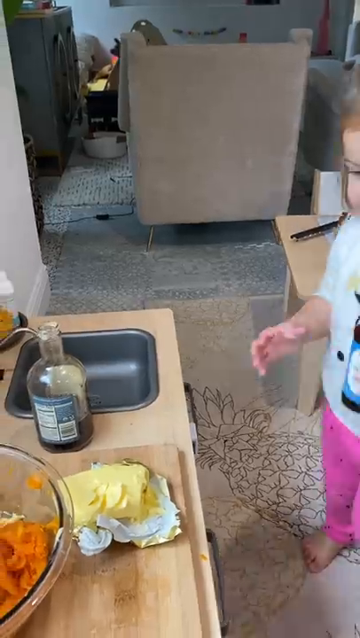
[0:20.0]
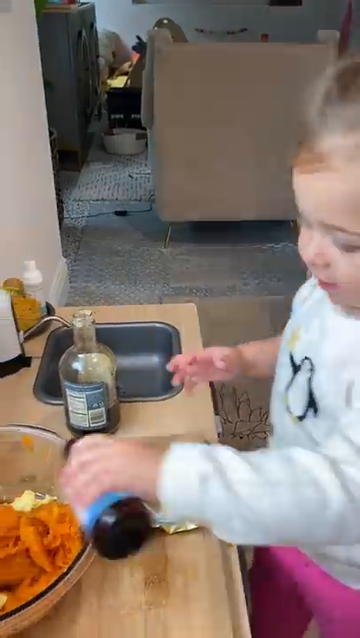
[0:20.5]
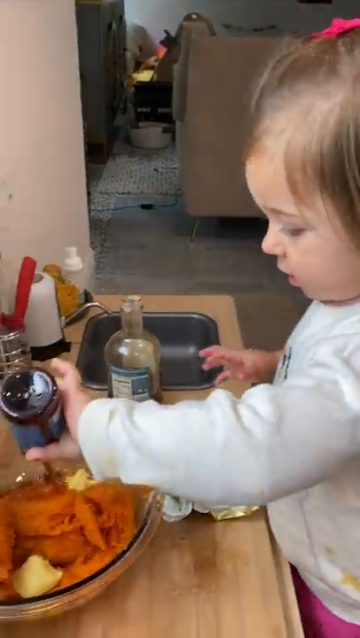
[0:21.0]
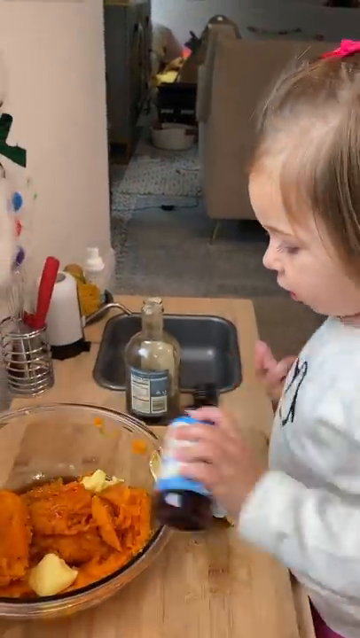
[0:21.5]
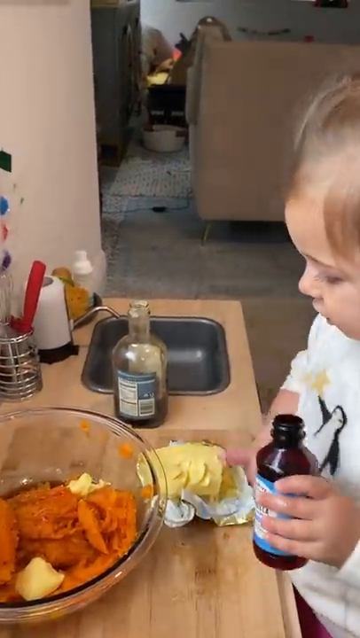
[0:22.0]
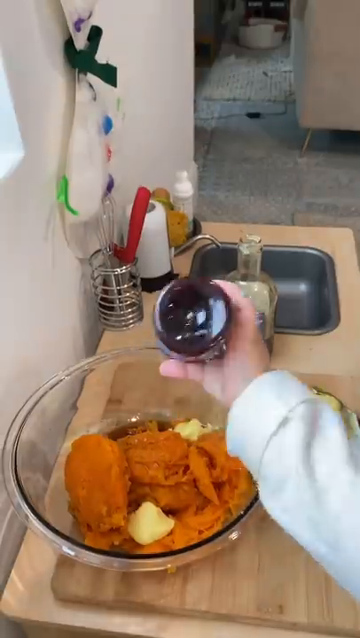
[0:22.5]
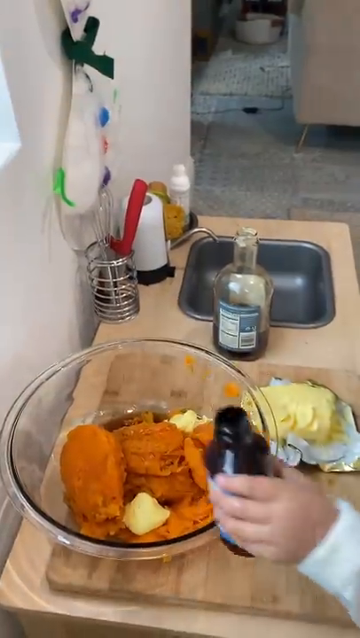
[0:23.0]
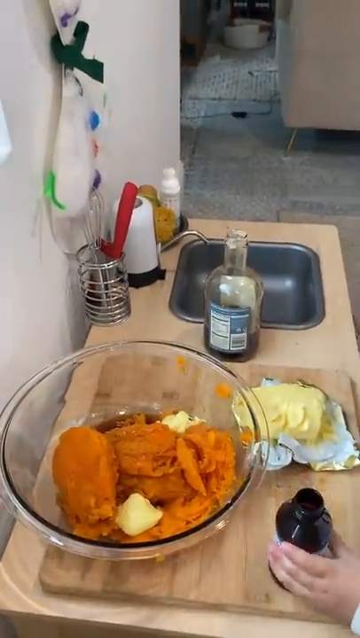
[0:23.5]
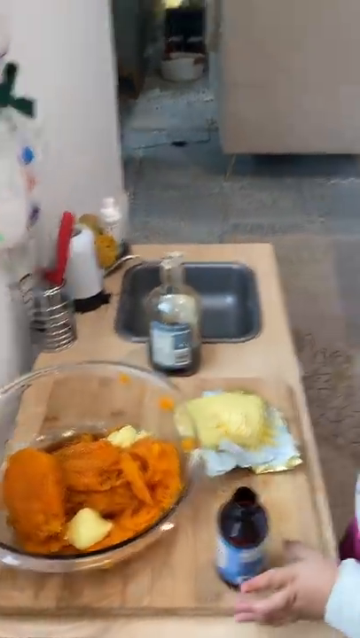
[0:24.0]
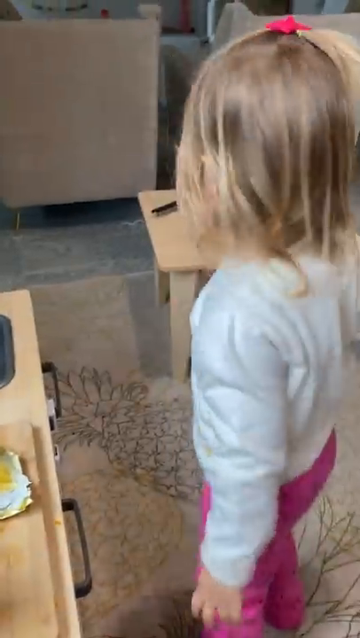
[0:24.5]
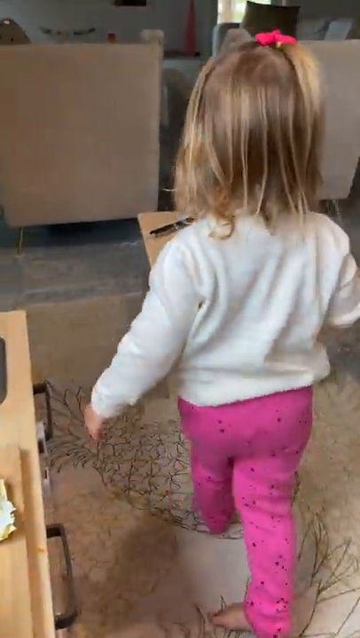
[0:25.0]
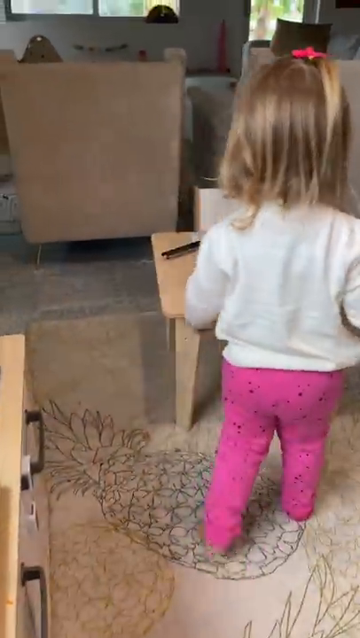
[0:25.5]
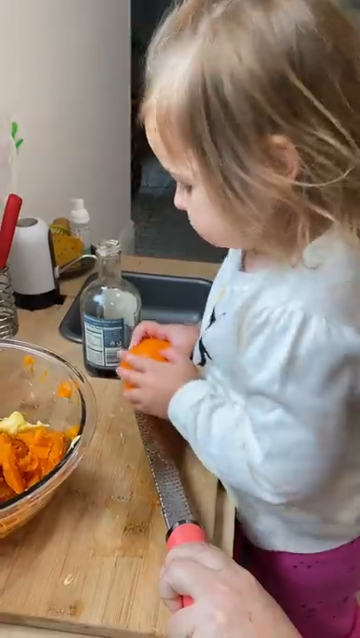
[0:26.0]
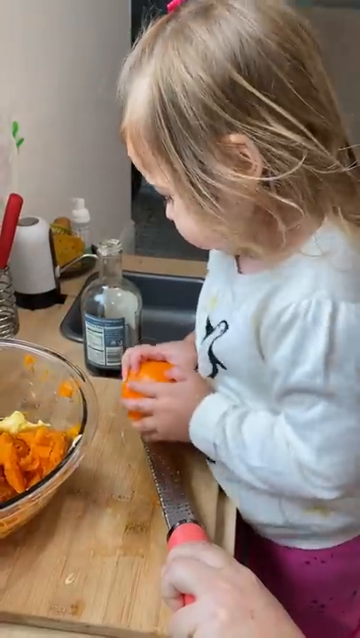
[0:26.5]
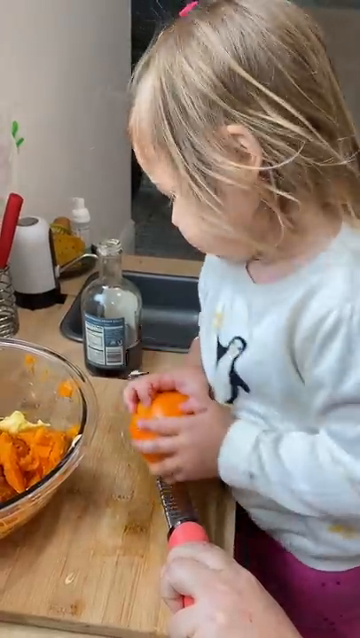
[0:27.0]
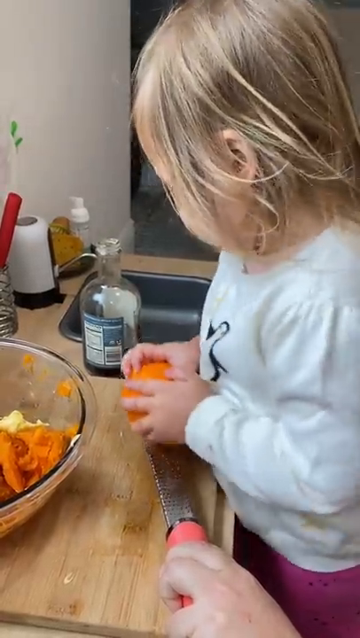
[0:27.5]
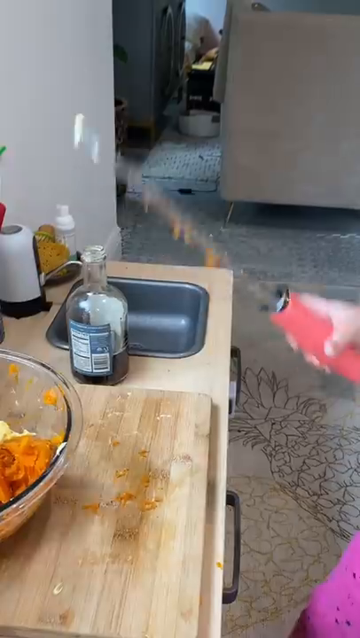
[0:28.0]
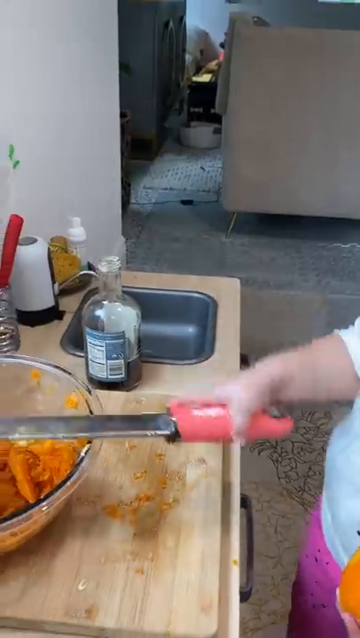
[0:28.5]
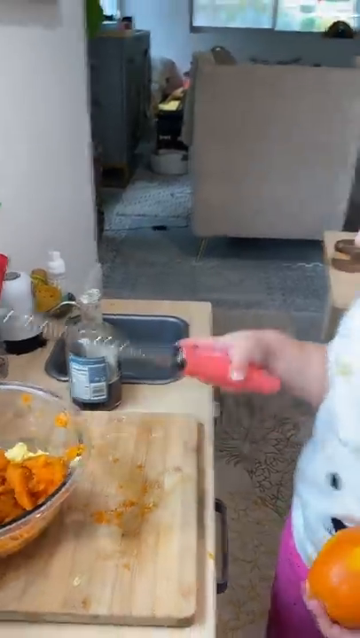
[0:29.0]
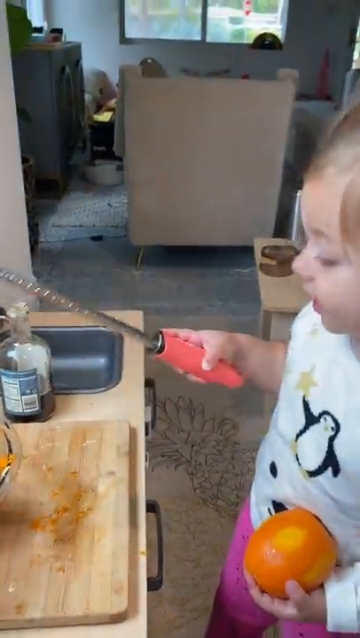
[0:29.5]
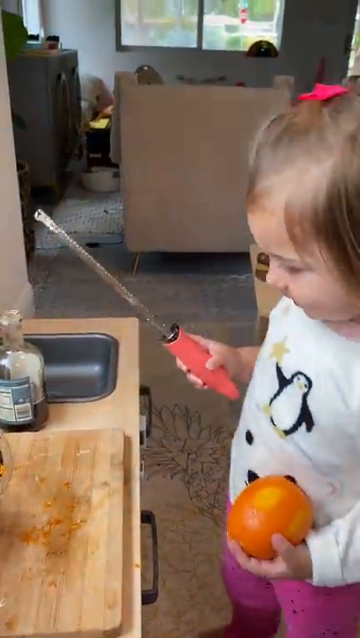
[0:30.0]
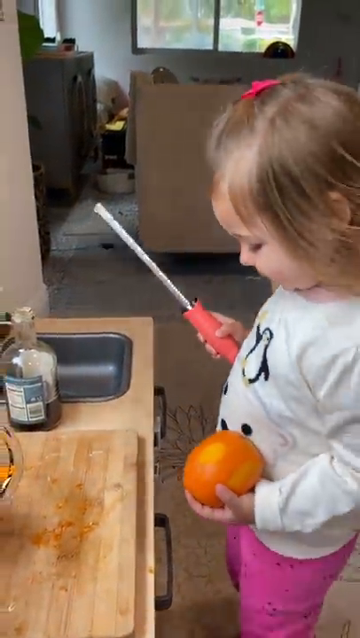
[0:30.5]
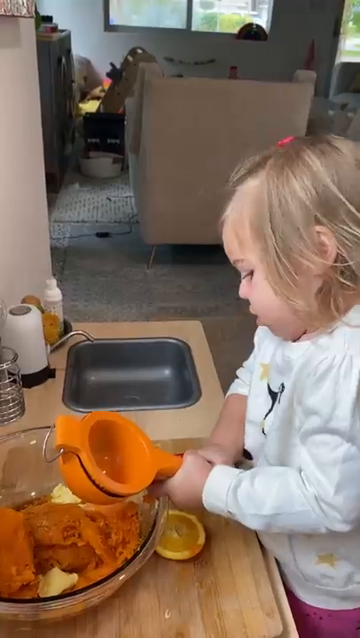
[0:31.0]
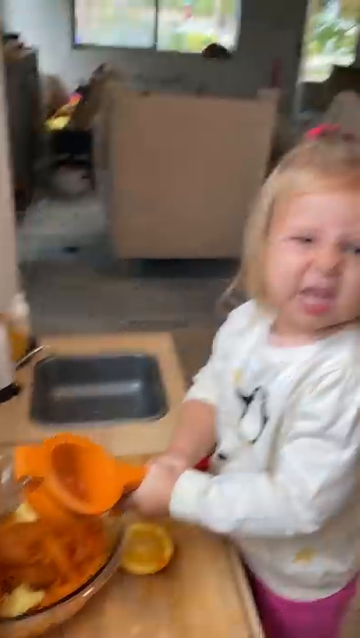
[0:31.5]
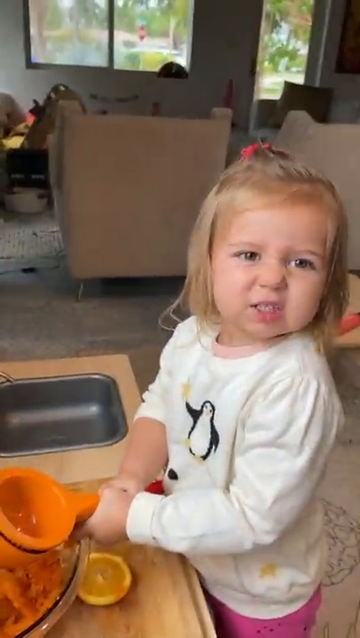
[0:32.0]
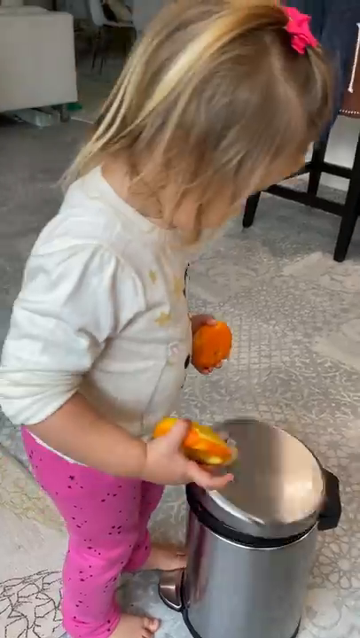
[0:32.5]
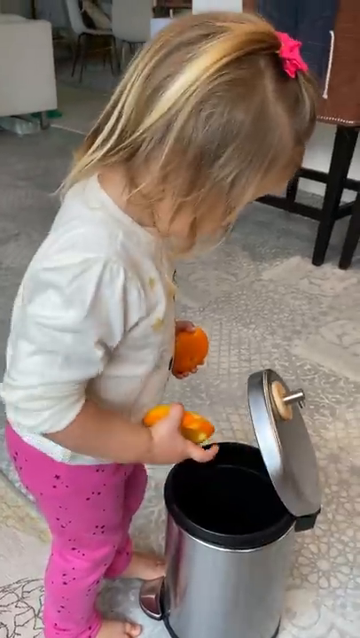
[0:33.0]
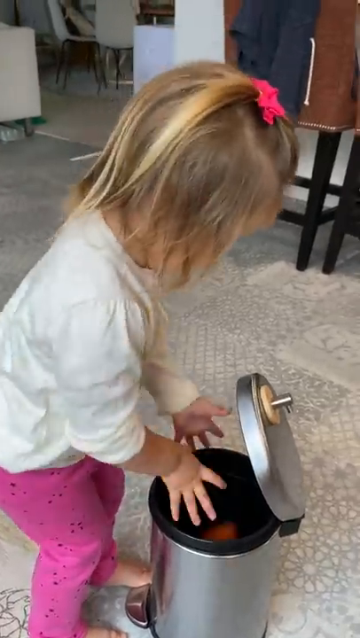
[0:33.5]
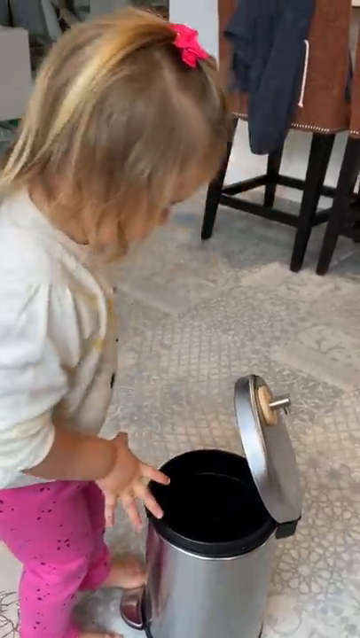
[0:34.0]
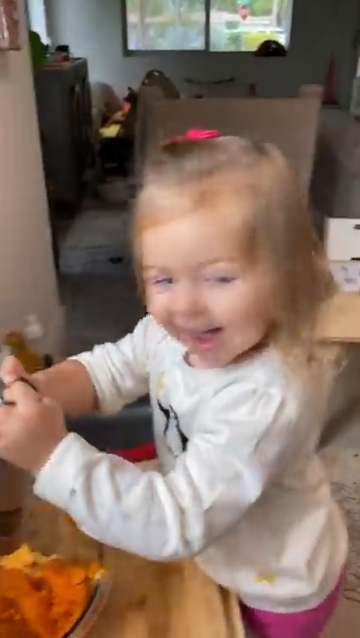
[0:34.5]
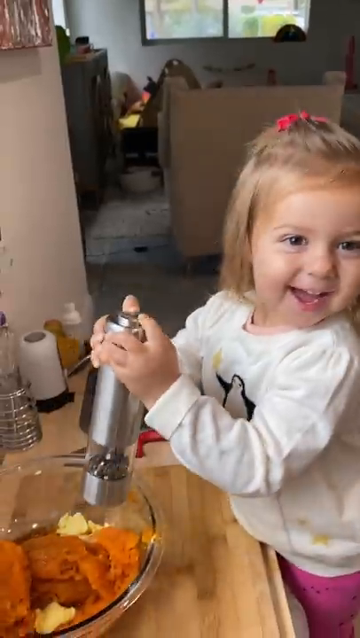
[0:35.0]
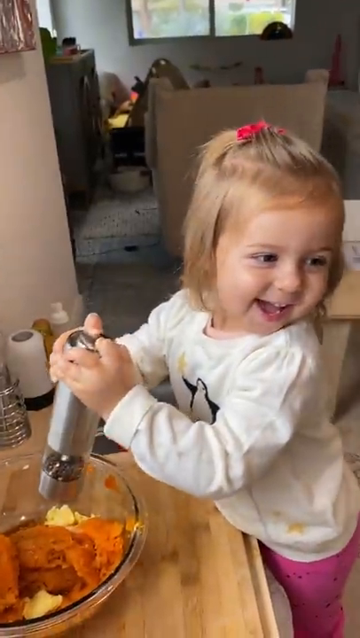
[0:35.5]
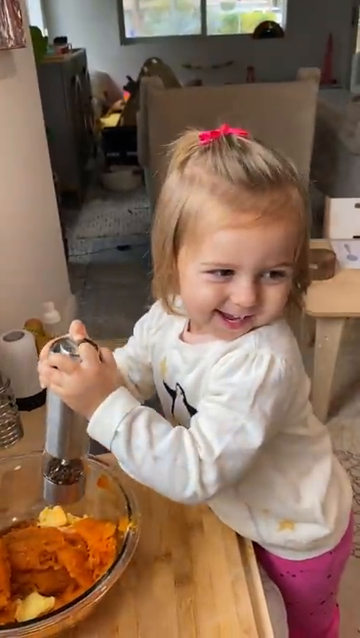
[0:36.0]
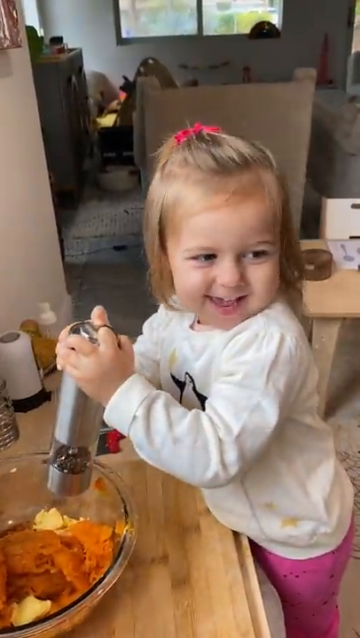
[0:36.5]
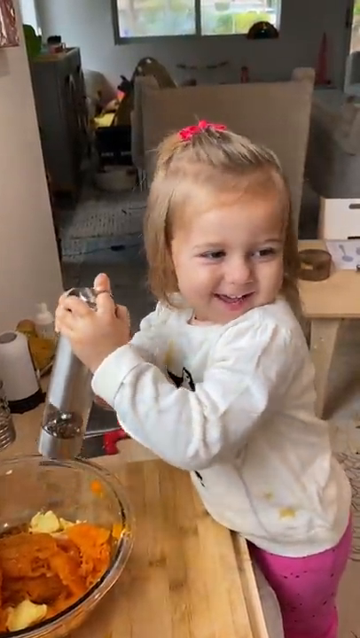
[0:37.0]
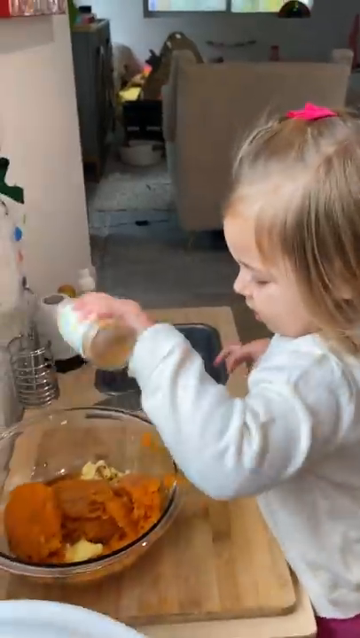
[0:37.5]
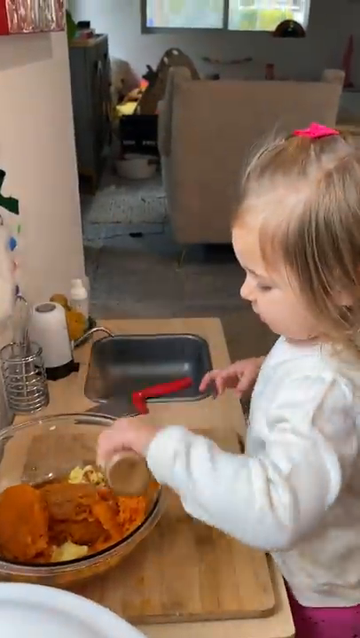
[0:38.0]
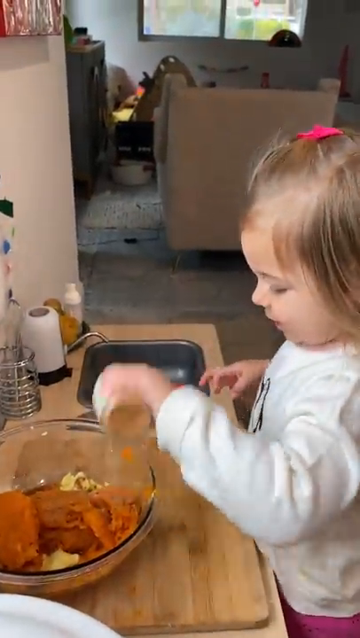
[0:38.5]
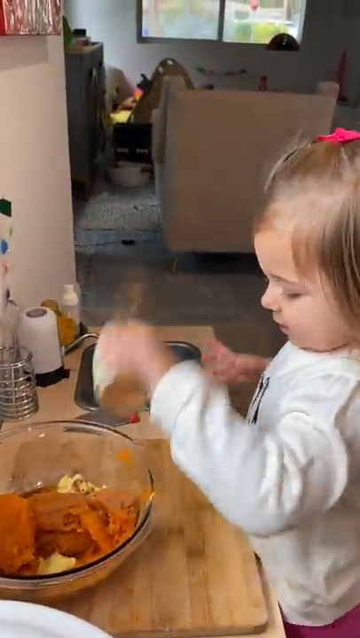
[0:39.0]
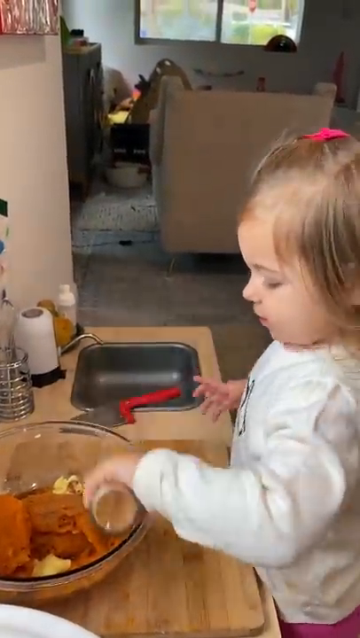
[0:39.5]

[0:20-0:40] With the sweet potatoes all mixed up, the girl adds other ingredients, possibly including some vanilla. She uses two hands to grate an orange and puts the zest in, then puts the peels in the garbage can. She uses an orange squeezer to squeeze out the orange juice and throws away the rest. With a very large silver pepper grinder she adds seasonings, pepper and possibly some cinnamon, to her sweet potatoes. She is pretty good with her tools. She then gets a red hand mixer with the beaters attached and seems to be about to mix it all together.